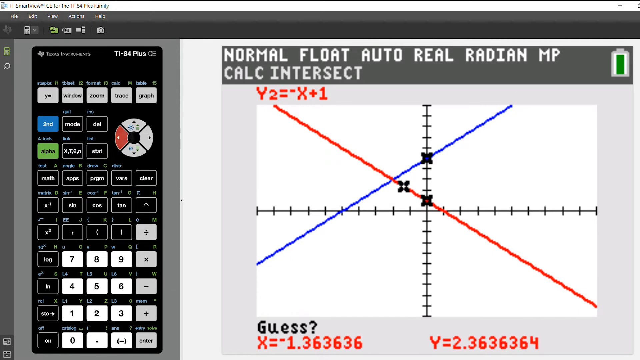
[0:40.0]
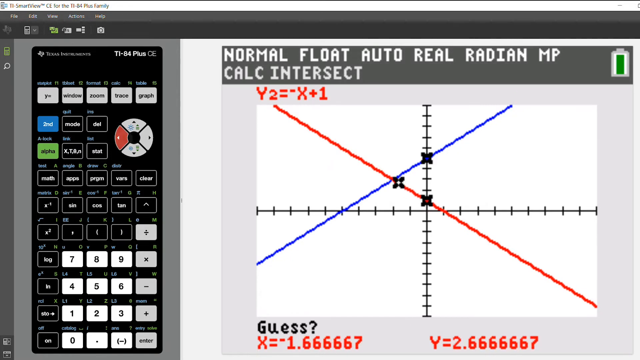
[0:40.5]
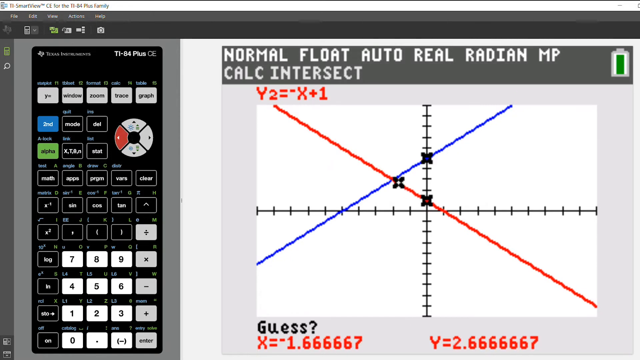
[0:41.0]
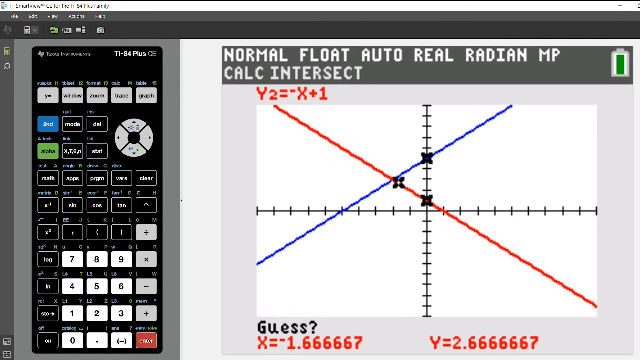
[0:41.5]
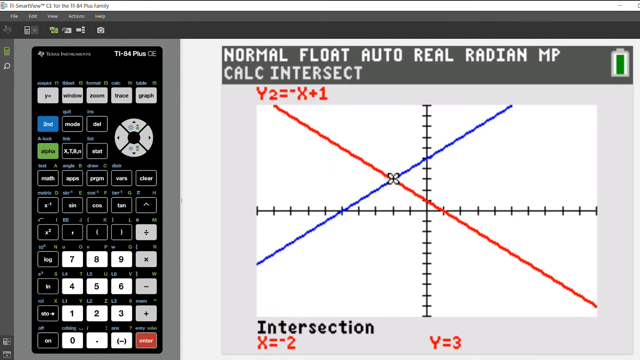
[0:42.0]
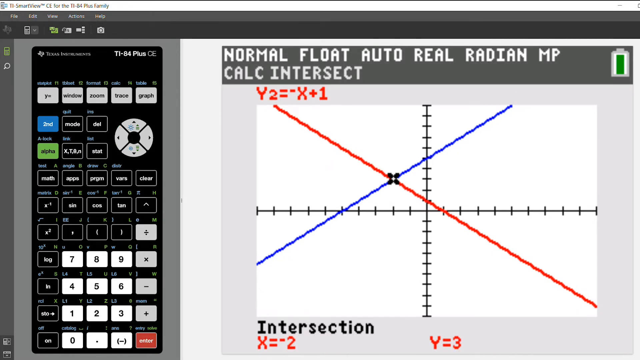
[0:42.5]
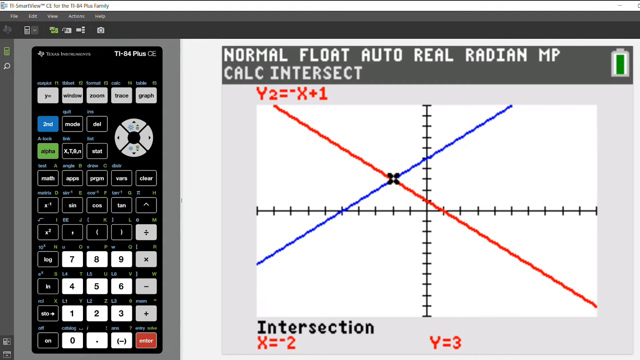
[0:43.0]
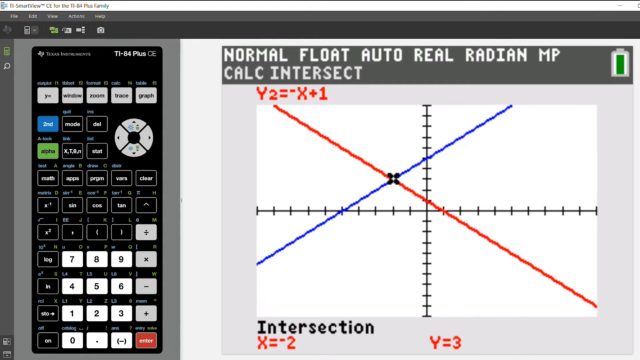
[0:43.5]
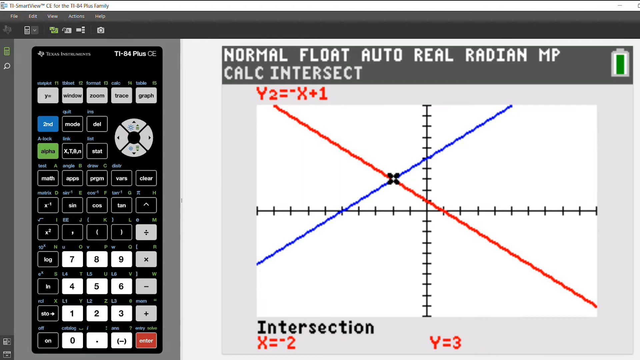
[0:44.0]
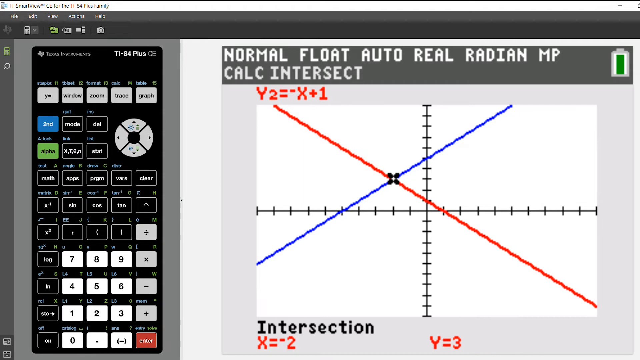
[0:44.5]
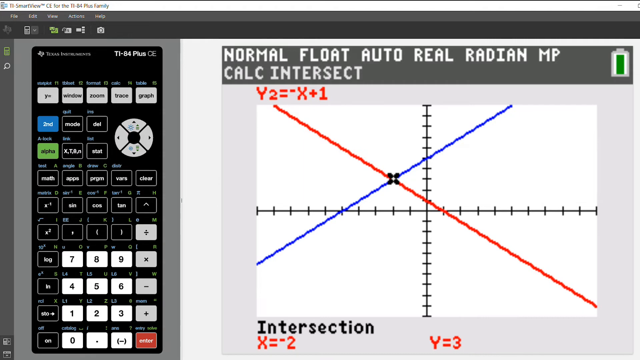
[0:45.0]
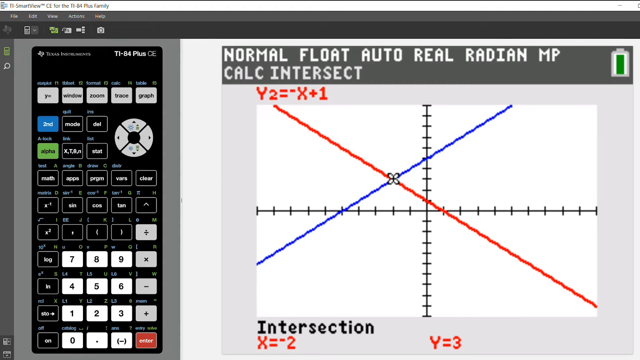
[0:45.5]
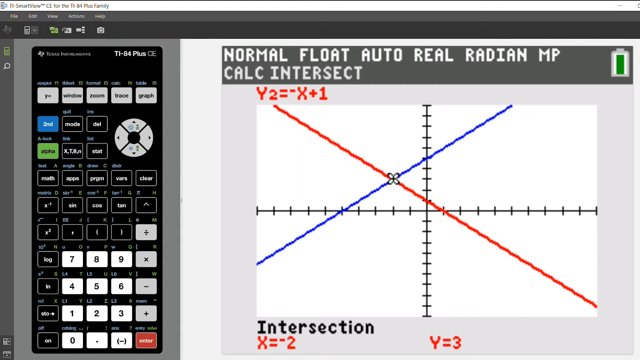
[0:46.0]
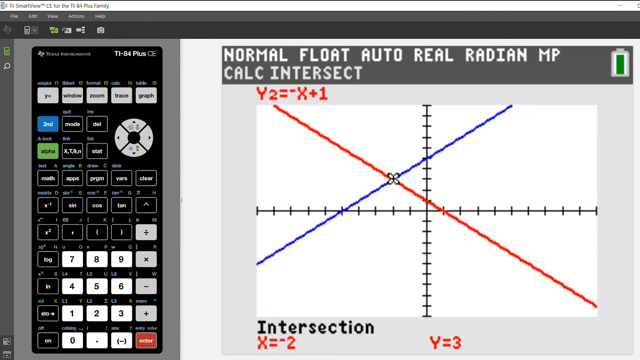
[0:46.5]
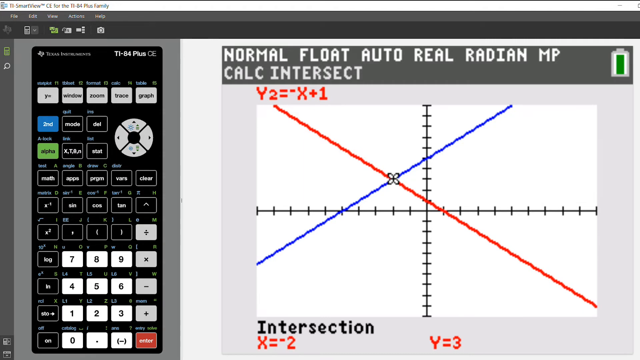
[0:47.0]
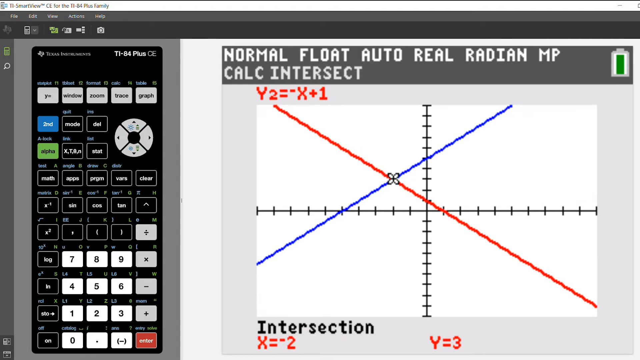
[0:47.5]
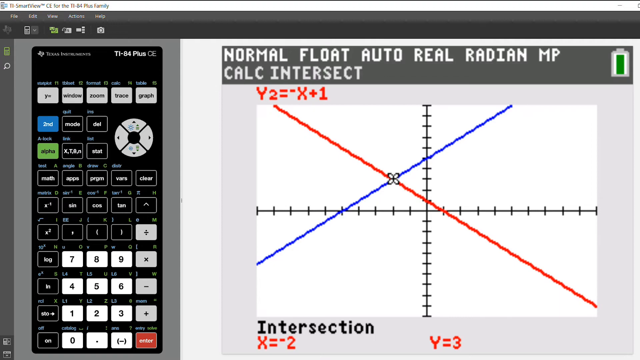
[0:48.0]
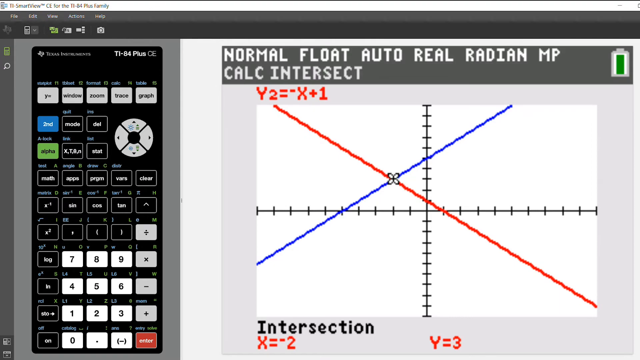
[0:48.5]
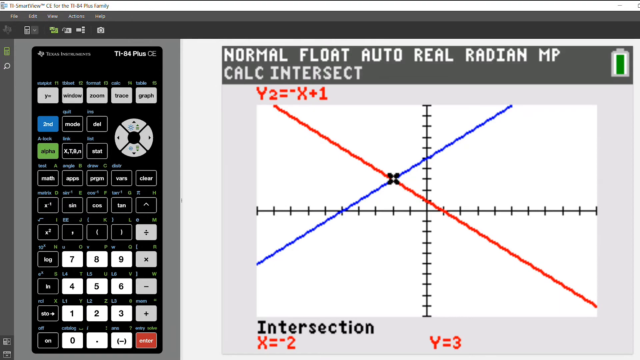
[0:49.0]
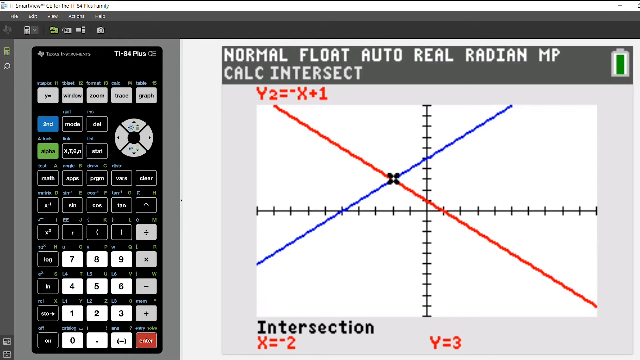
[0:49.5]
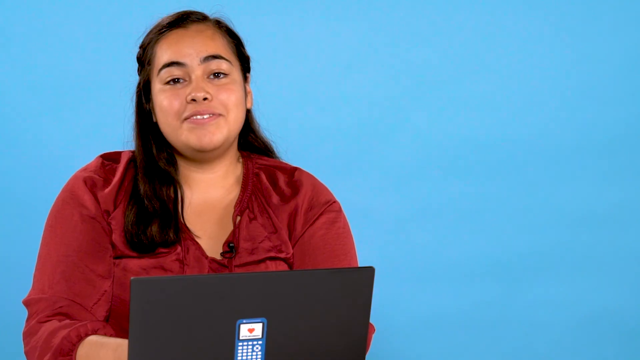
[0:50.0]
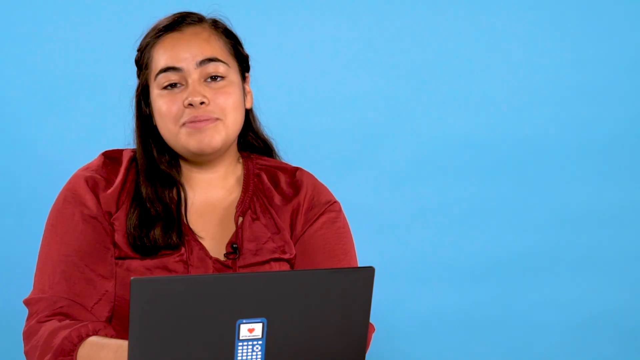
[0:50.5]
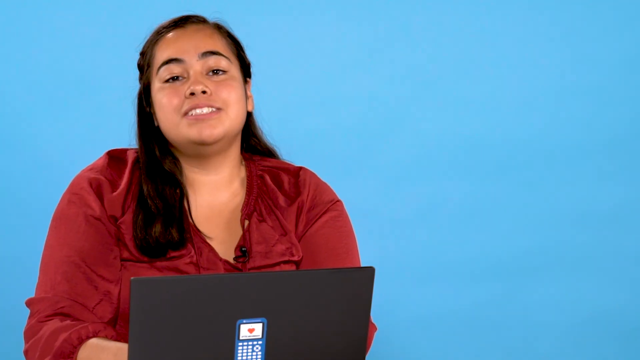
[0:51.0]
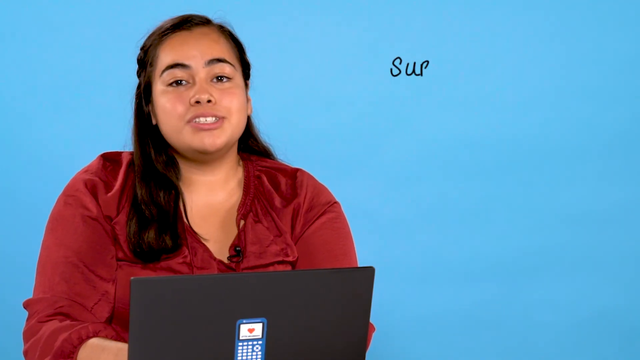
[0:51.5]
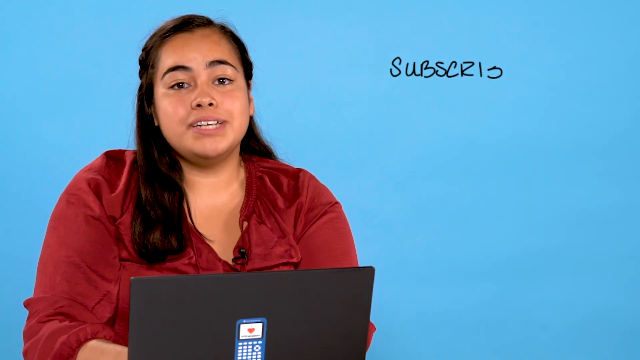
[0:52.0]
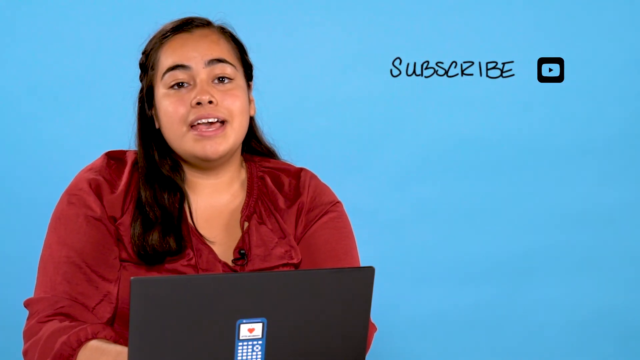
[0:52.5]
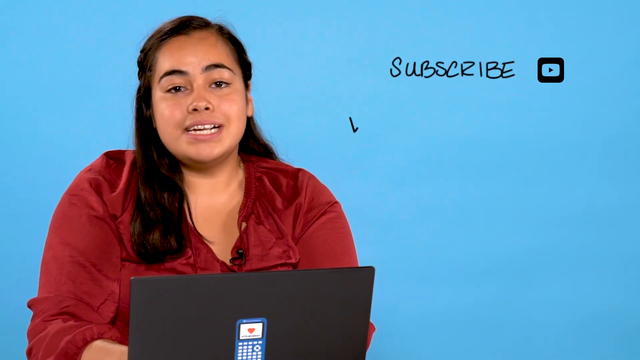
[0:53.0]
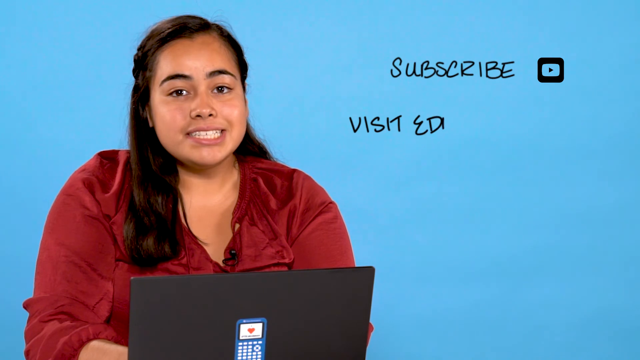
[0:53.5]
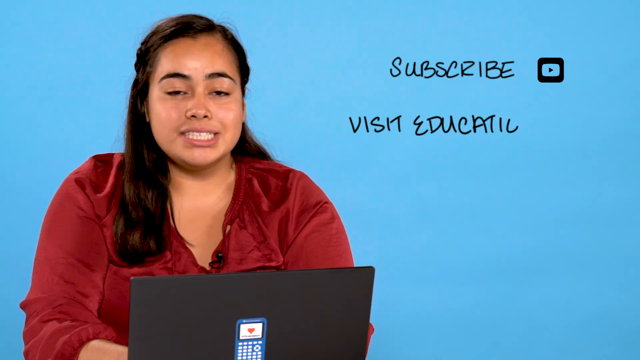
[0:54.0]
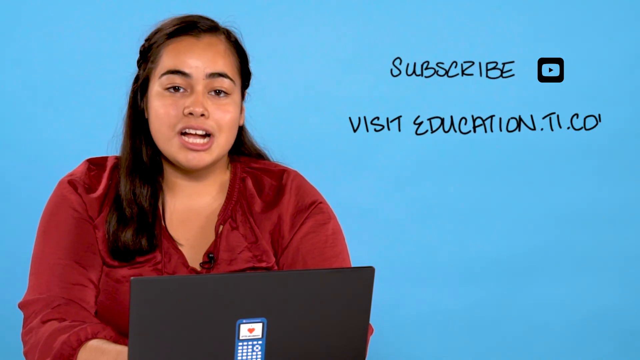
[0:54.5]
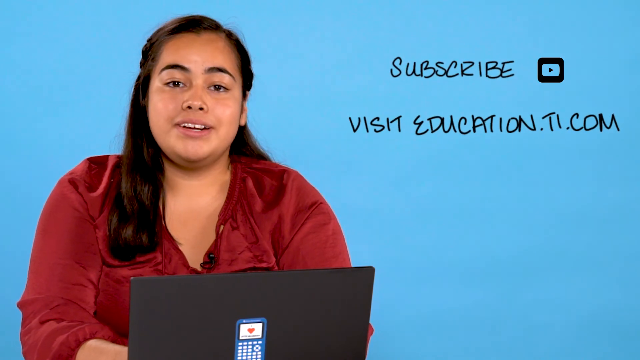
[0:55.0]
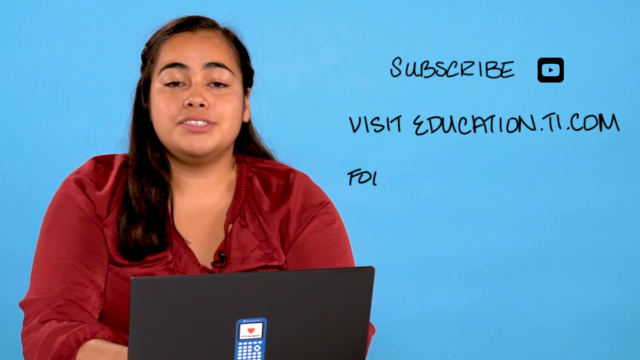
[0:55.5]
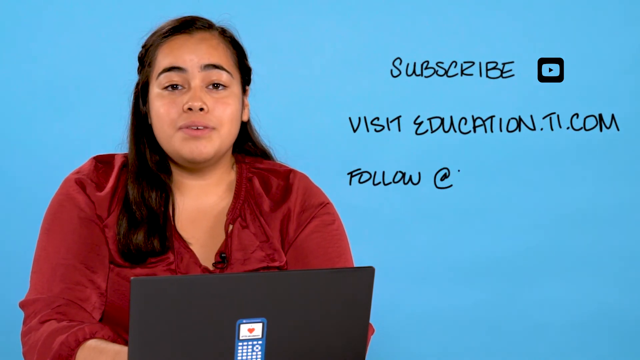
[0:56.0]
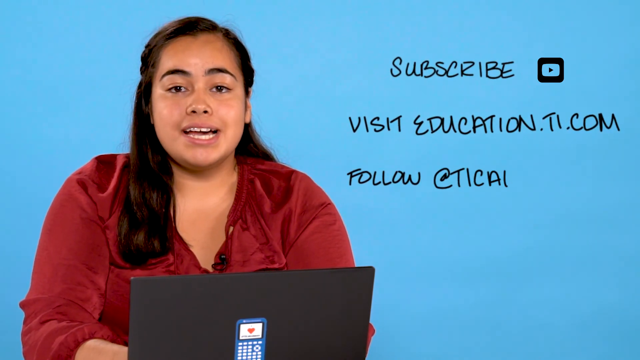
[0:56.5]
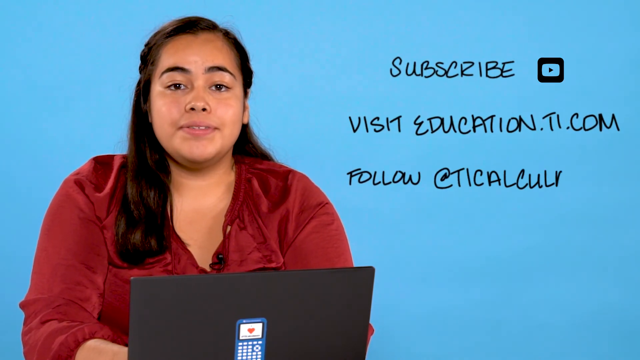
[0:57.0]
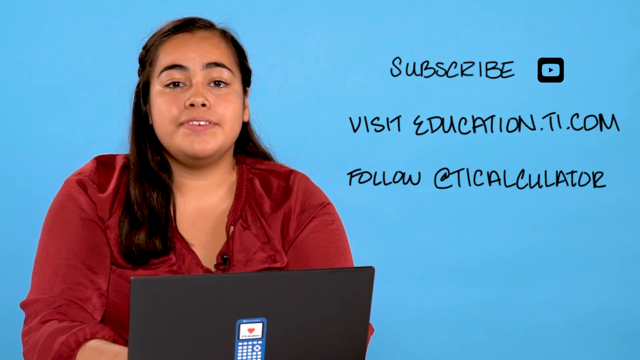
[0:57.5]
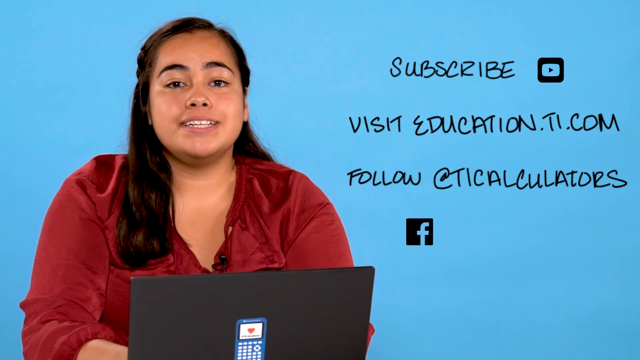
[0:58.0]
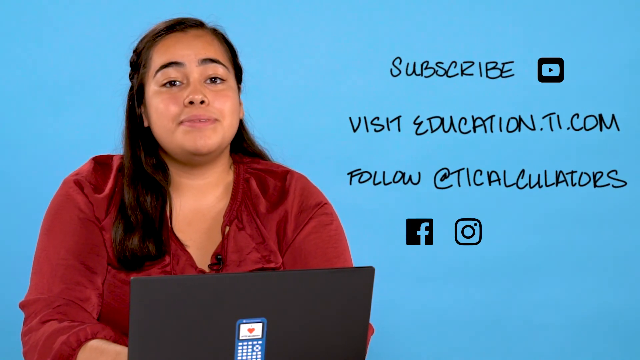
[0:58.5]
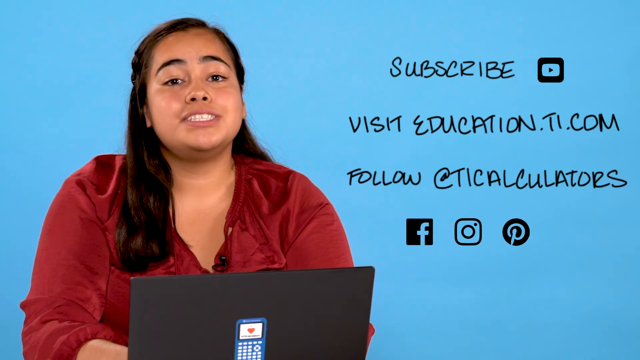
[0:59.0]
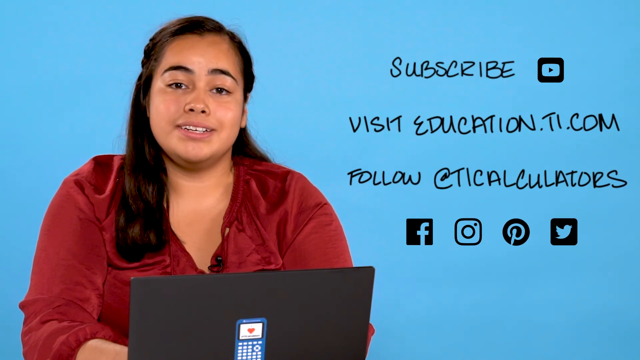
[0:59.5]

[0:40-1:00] The TI-84 Plus graphing calculator is on the left-hand side, beside a graph with two intersecting lines: a blue line from lower left to upper right and a red line from upper left to lower right. The graphing calculator is used to show where the two lines cross, with the equation y squared equals minus x plus 1. The video then goes to the woman in the red long-sleeved shirt, who is Hispanic and a little heavier set. Text reads "subscribe", "visit education.ti.com" and "follow at TI calculators". It then goes to the finishing screen, with the TI-84 Plus on the left-hand side of the screen showing the graph of x squared equals minus x plus 1: a white background with a black graph with a vertical and a horizontal line, a blue line from the lower left-hand side to the upper right-hand side, and a red line from the upper left-hand side to the lower right-hand side.